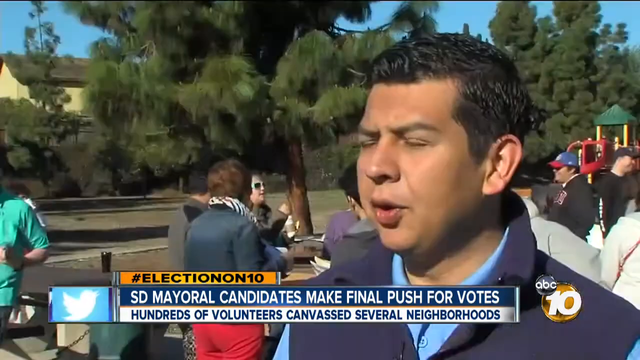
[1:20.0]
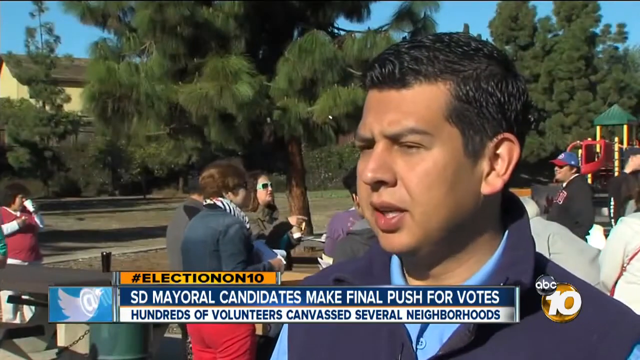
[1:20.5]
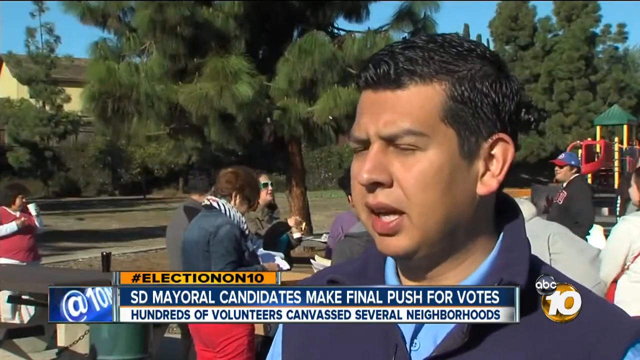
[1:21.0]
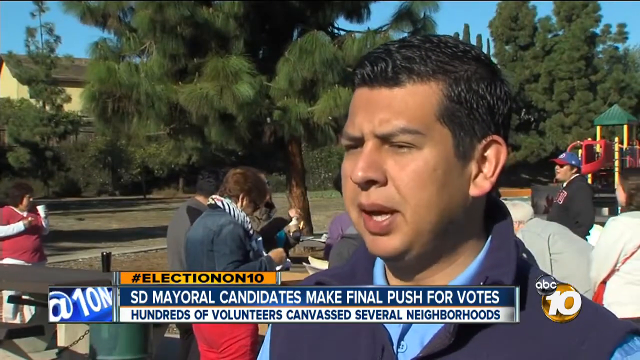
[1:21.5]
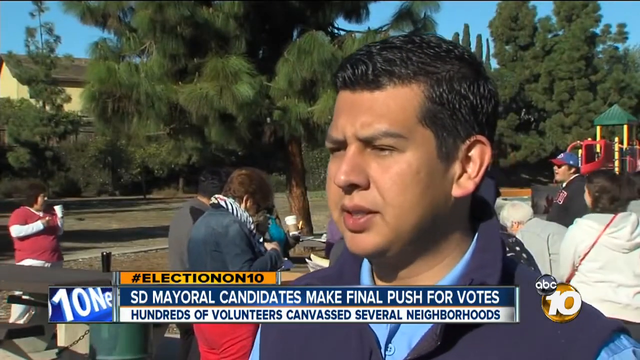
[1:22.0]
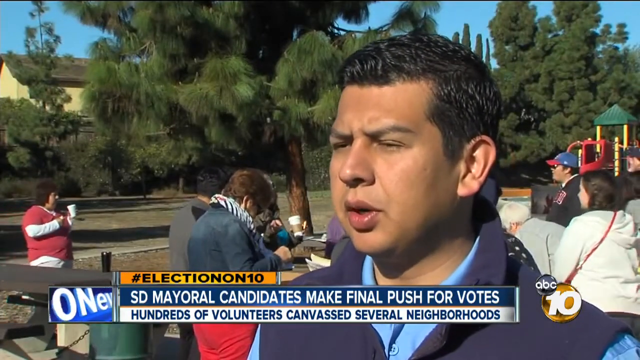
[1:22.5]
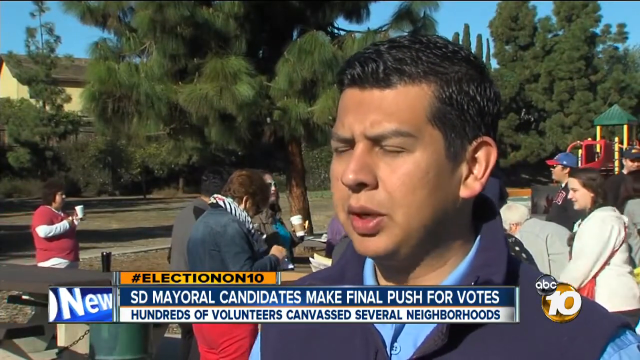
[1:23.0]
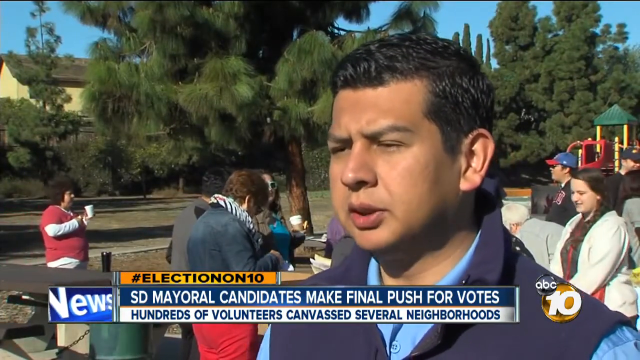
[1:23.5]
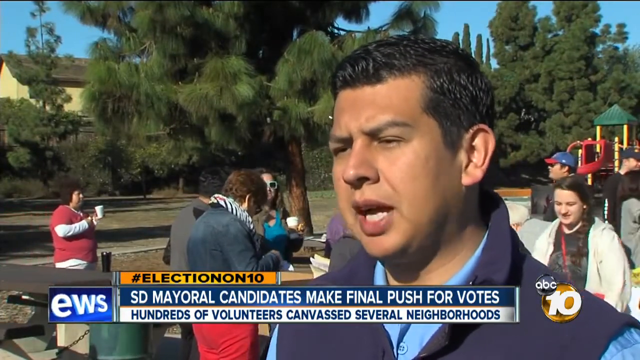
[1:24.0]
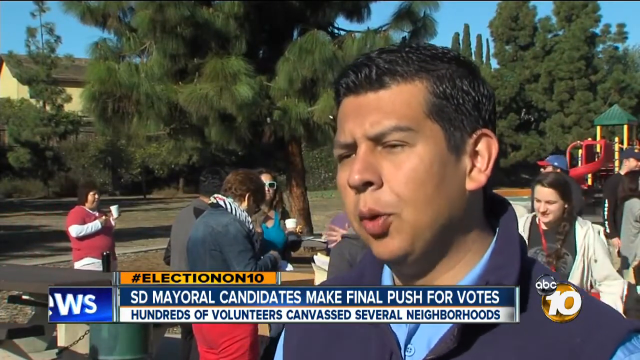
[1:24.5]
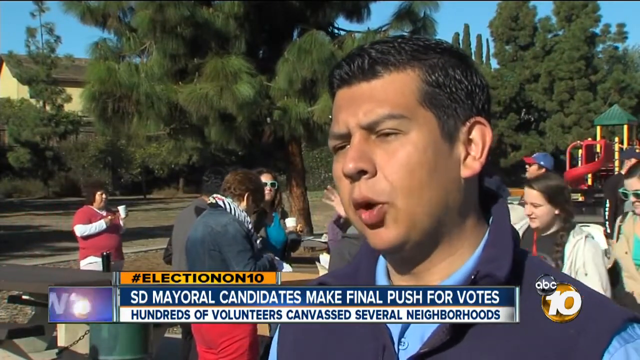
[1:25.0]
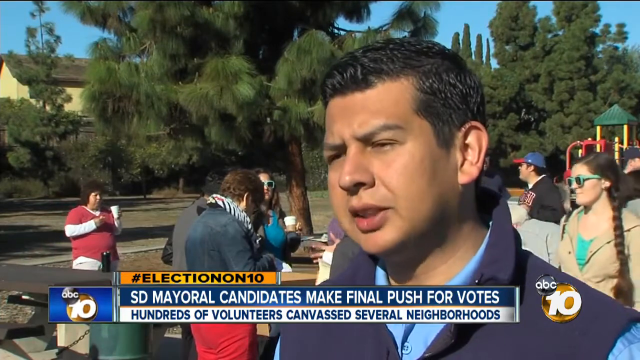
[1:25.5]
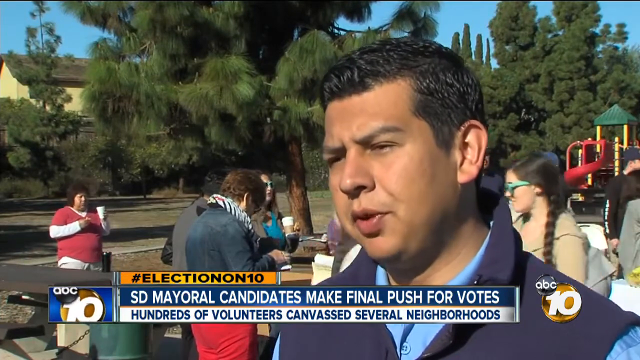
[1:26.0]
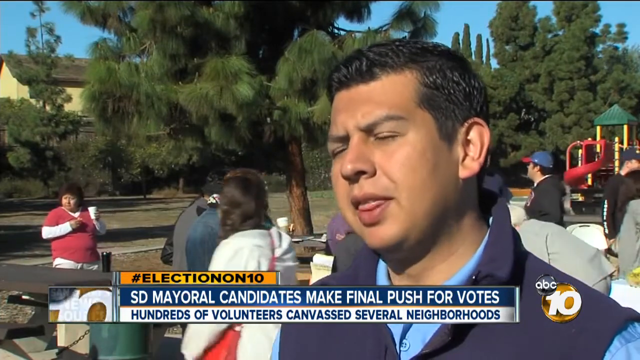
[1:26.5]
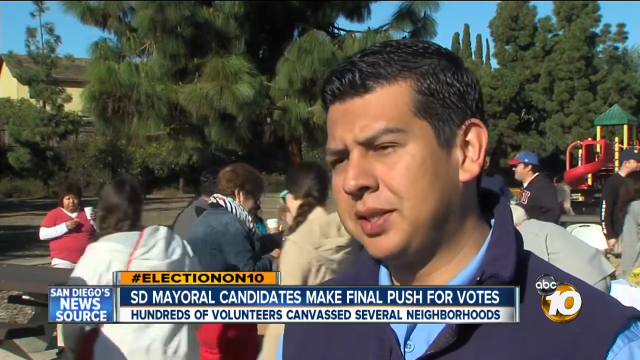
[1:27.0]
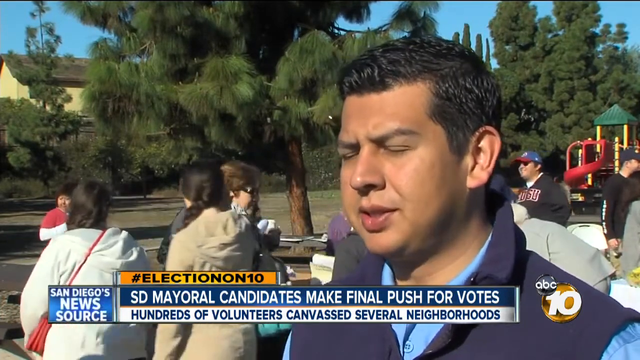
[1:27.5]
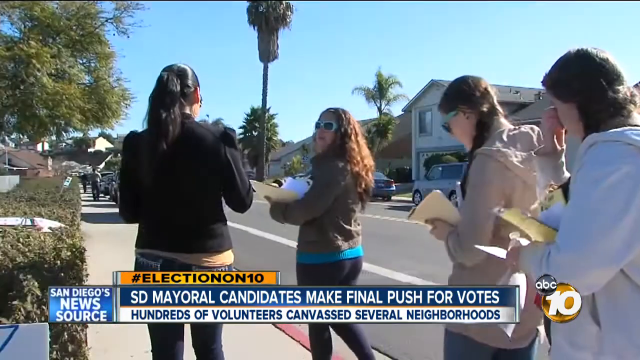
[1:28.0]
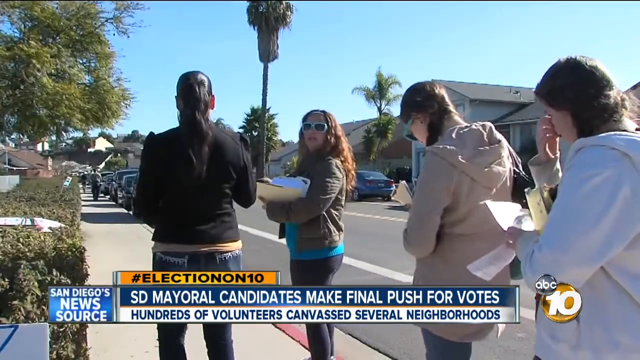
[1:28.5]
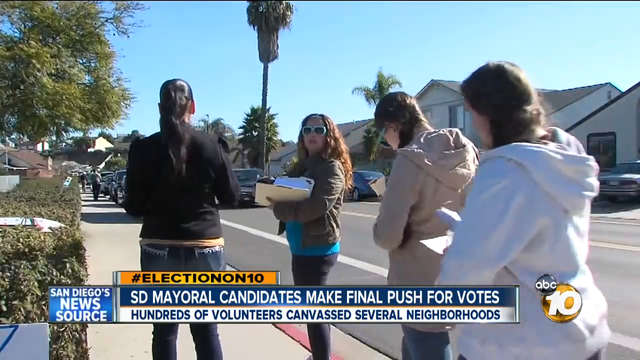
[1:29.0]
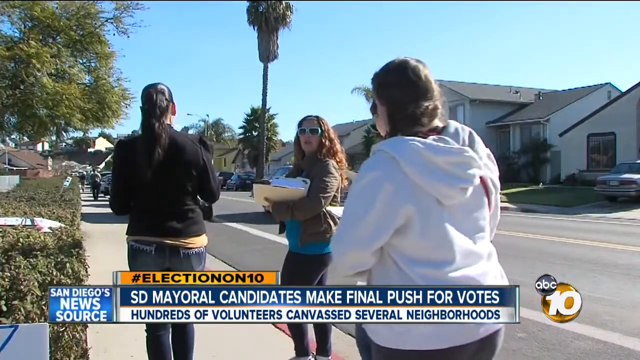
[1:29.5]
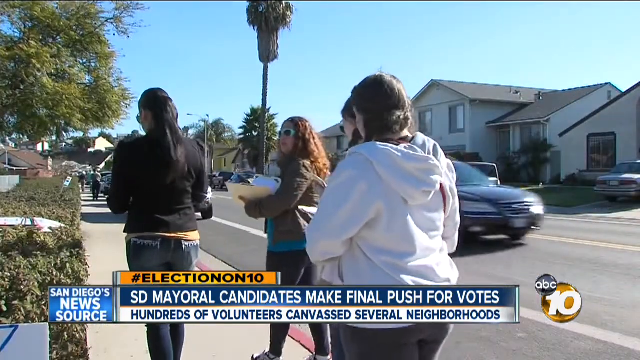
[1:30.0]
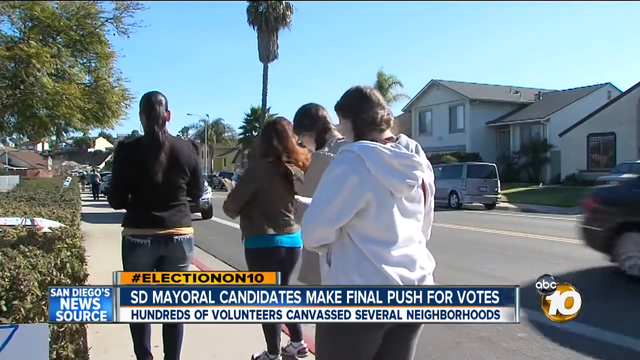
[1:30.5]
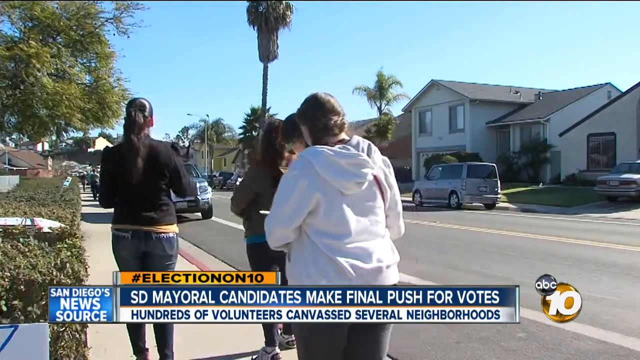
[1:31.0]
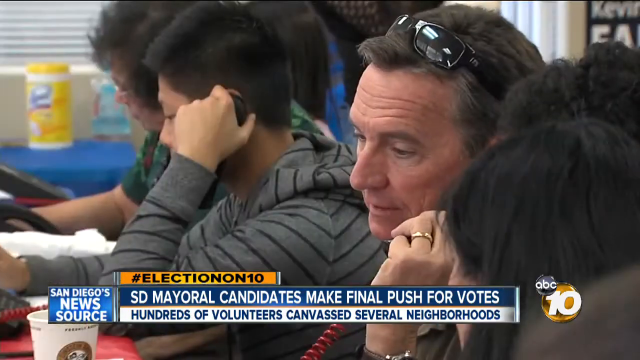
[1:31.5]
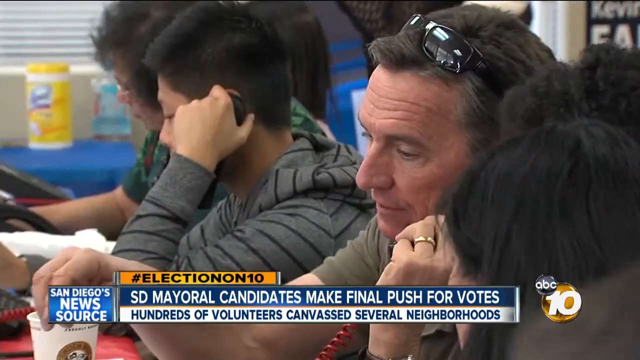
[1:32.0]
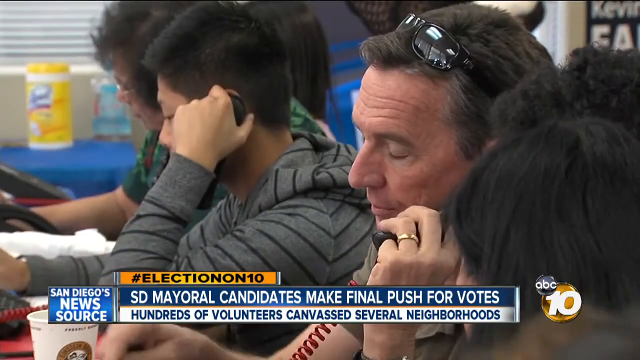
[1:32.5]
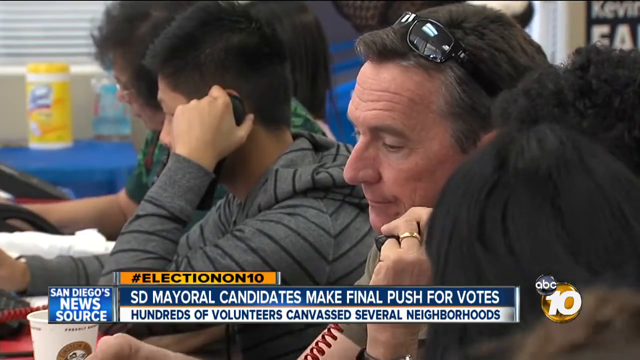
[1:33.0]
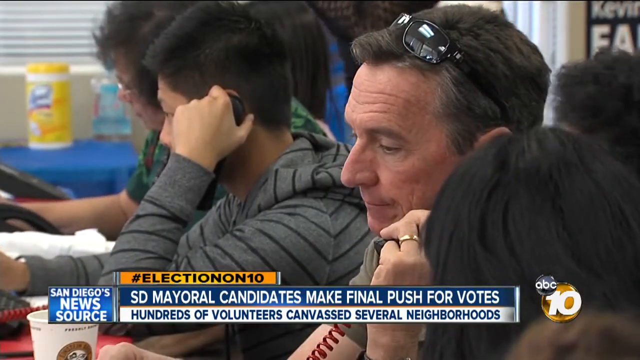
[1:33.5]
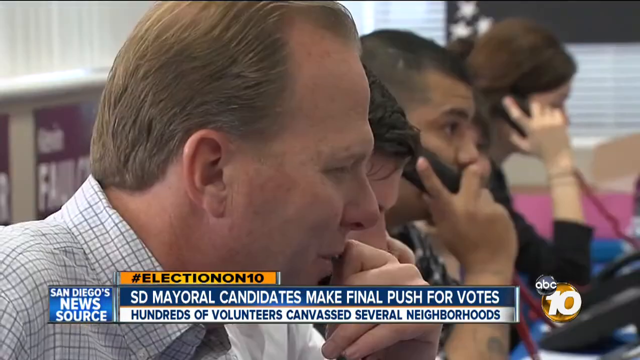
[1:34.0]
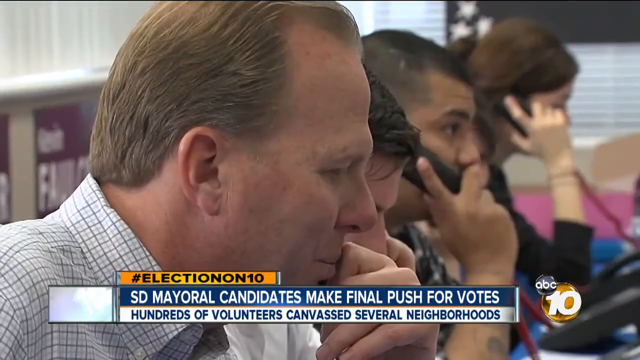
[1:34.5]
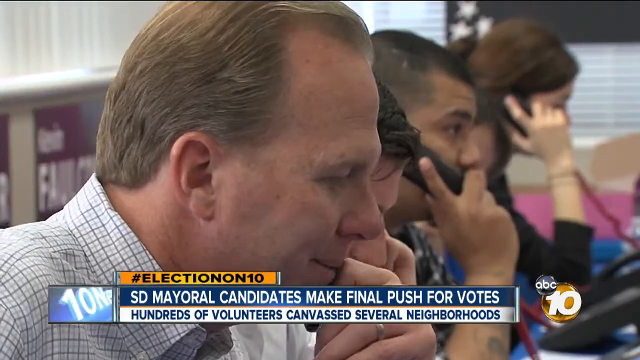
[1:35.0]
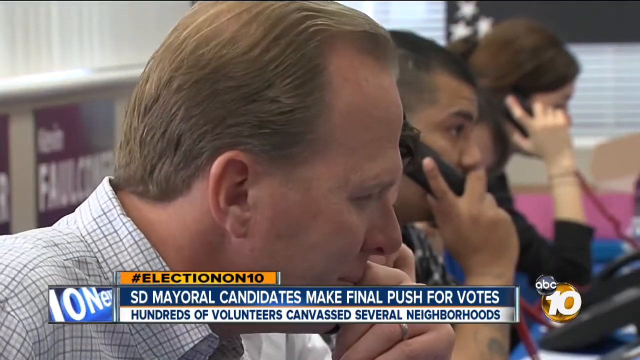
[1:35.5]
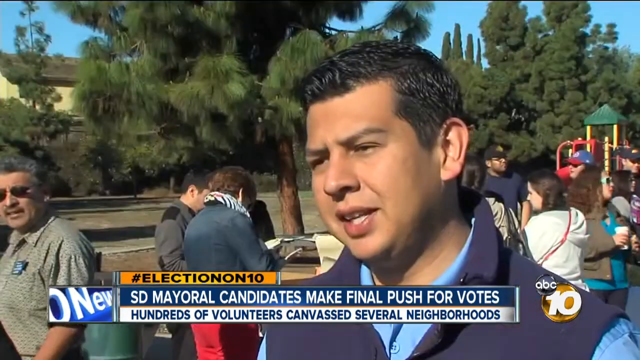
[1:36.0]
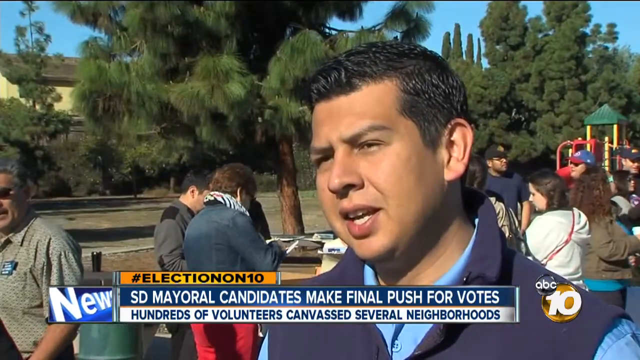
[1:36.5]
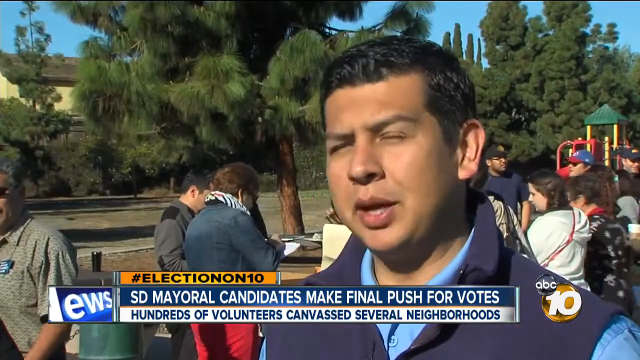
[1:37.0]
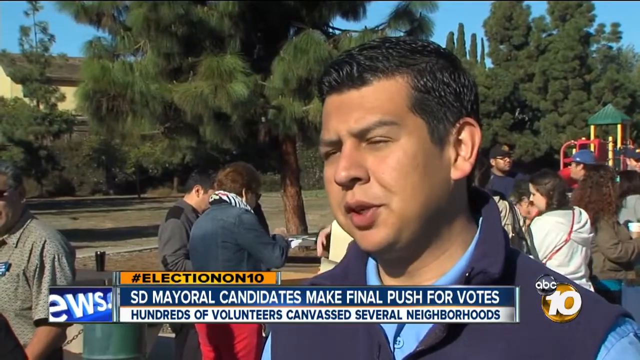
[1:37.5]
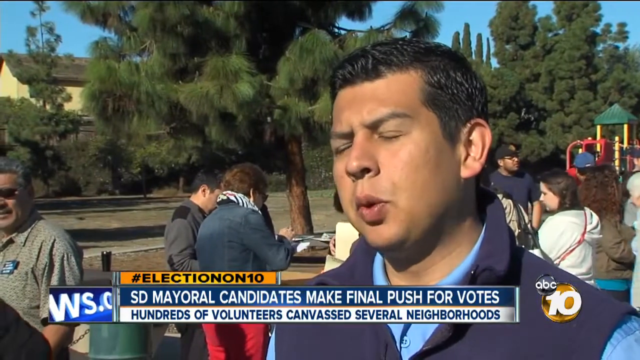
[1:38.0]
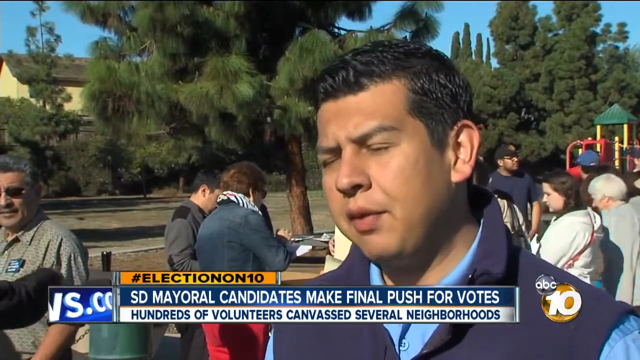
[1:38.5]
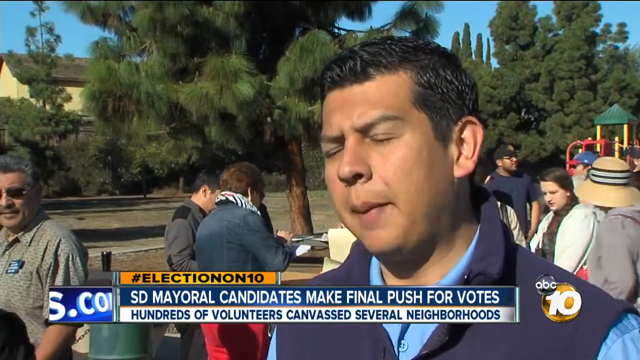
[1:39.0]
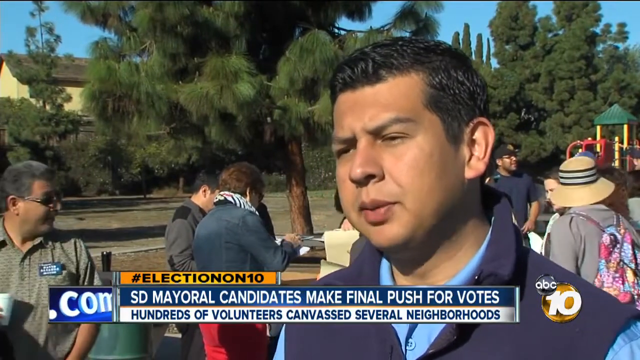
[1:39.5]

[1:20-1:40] An outdoor scene with greenery shows trees on the right and in the center left, with a house to the left of them. In the bottom left corner, half of a person is just visible, wearing a green short-sleeved top and black pants. To the right are three people facing the center right of the screen. A man at the front, facing the bottom left corner, has black hair and is talking to somebody; he wears a light blue shirt and a darker blue coat. There is a lot of movement in the background, and a children's playground is in the top right section. A street view then shows four women walking away, moving from the bottom right corner toward the top left corner.